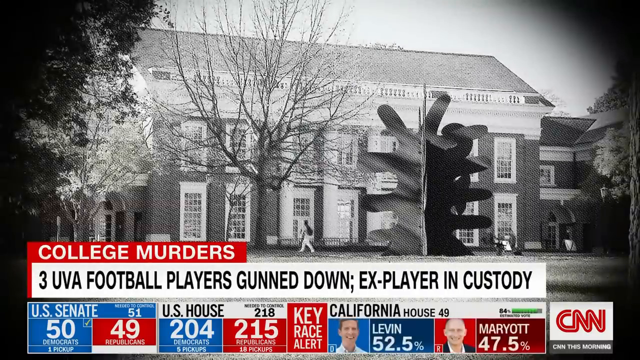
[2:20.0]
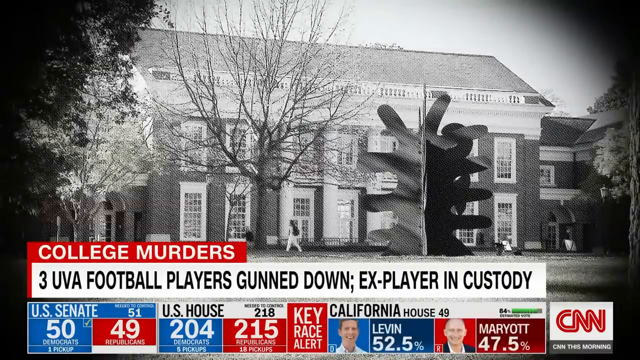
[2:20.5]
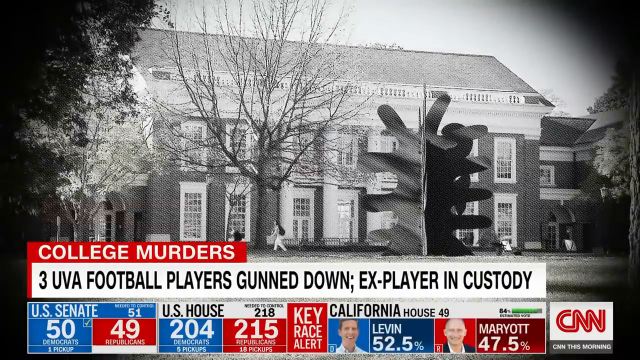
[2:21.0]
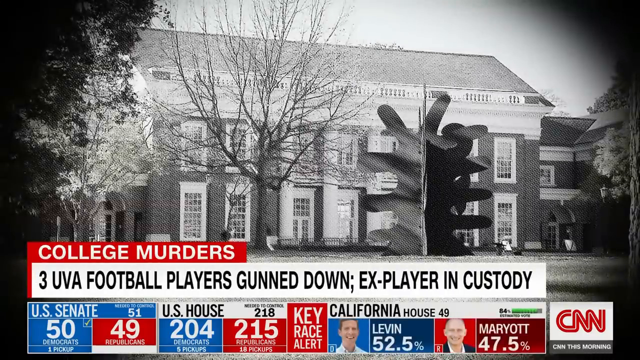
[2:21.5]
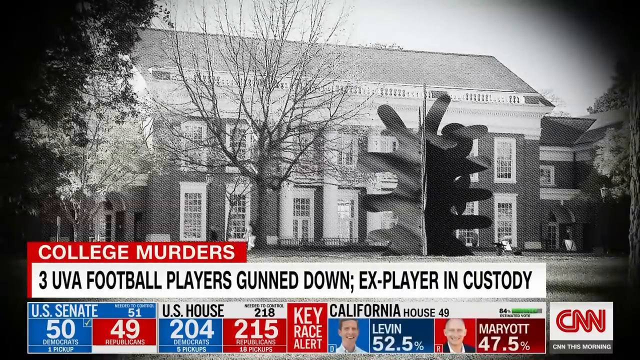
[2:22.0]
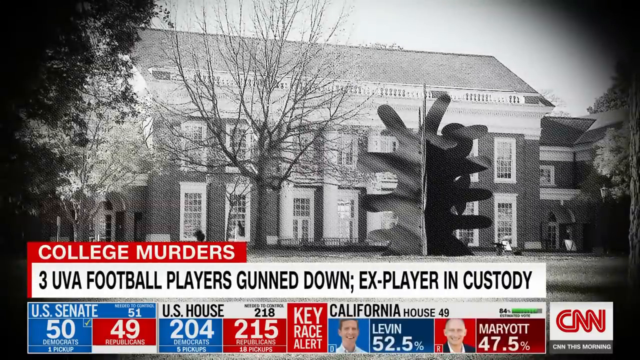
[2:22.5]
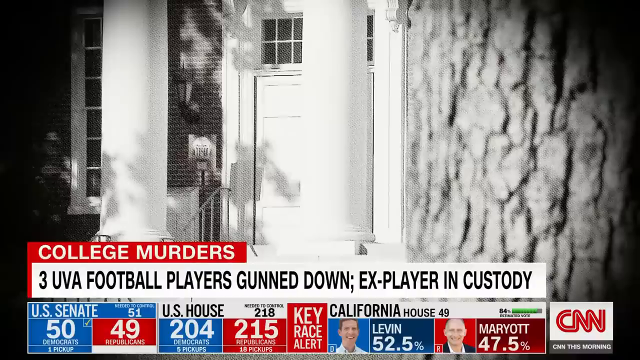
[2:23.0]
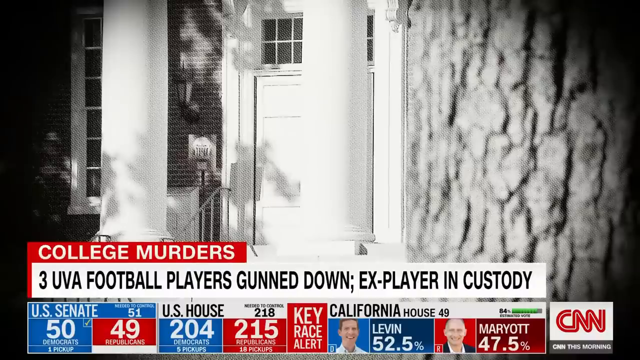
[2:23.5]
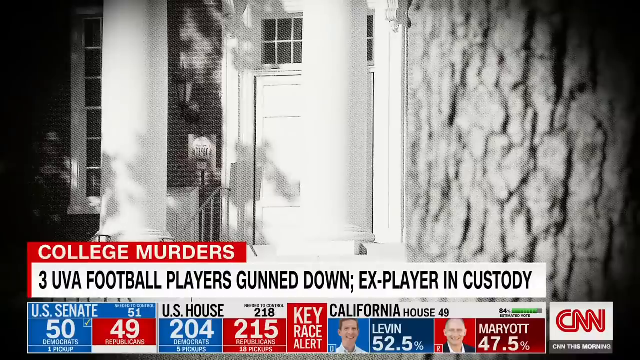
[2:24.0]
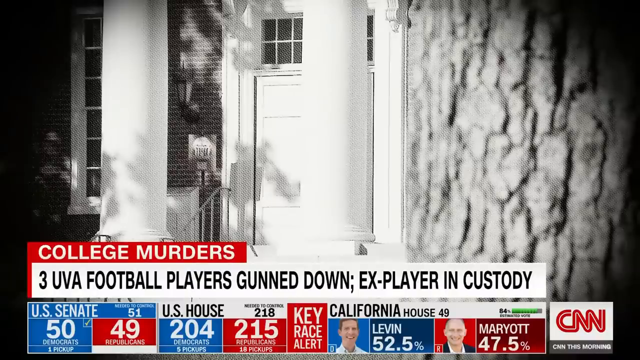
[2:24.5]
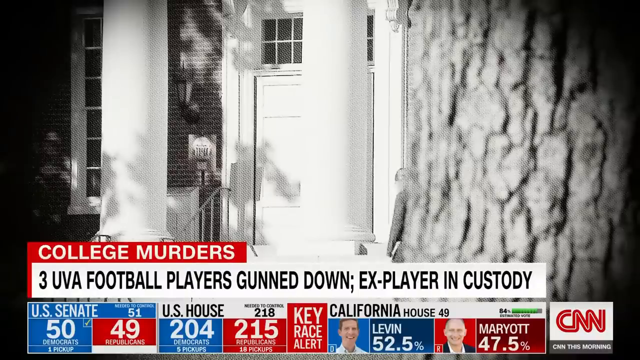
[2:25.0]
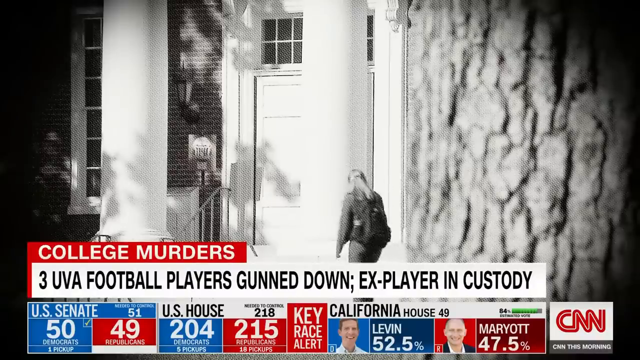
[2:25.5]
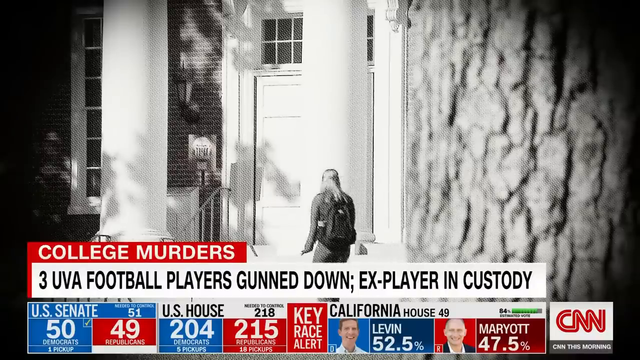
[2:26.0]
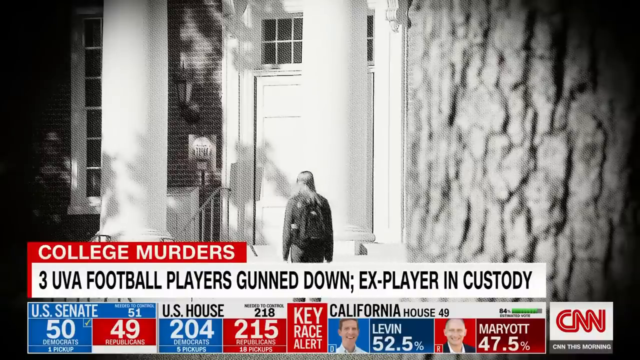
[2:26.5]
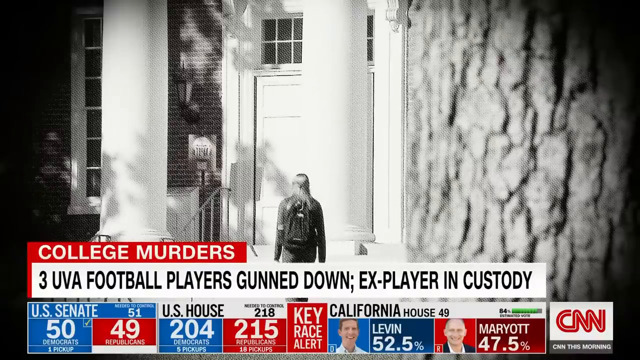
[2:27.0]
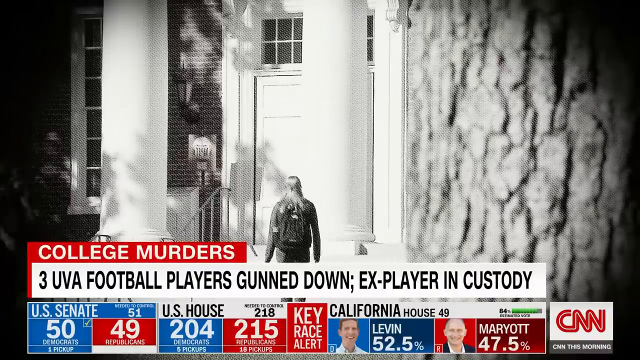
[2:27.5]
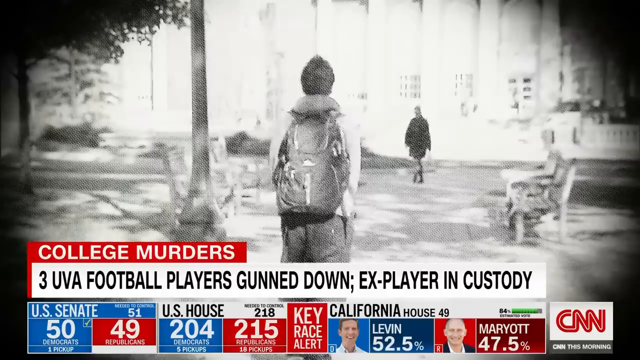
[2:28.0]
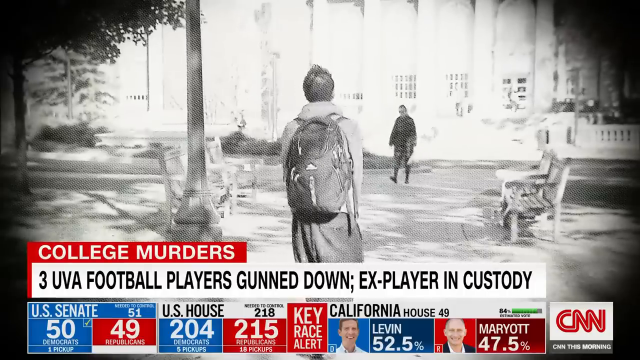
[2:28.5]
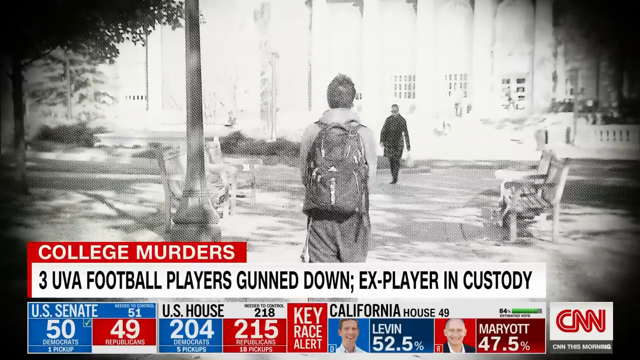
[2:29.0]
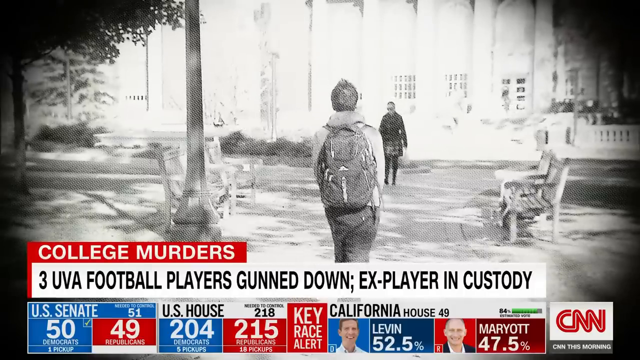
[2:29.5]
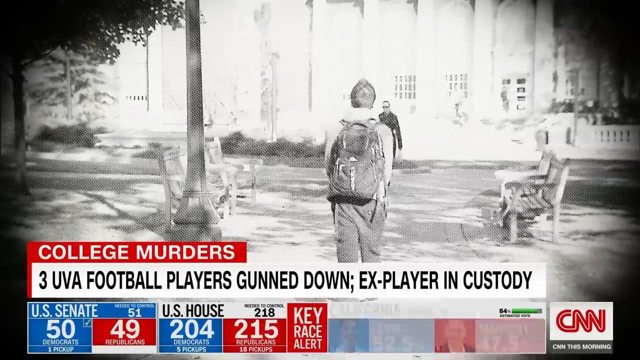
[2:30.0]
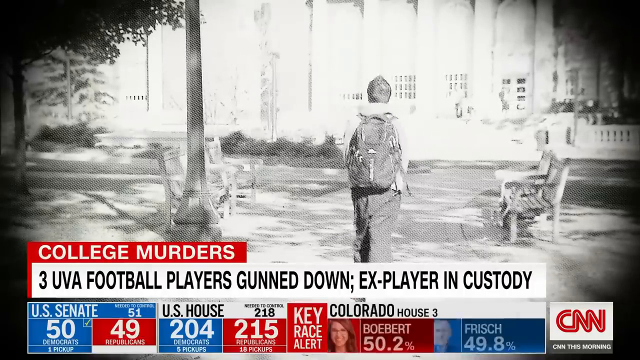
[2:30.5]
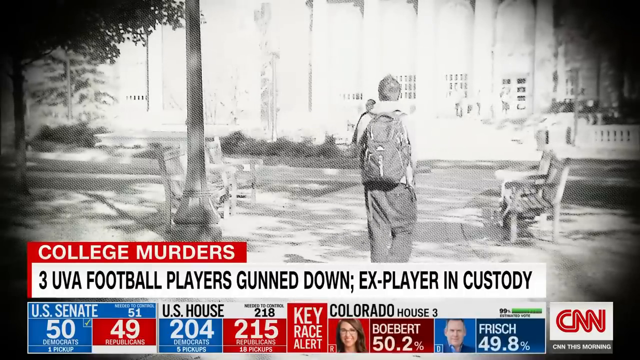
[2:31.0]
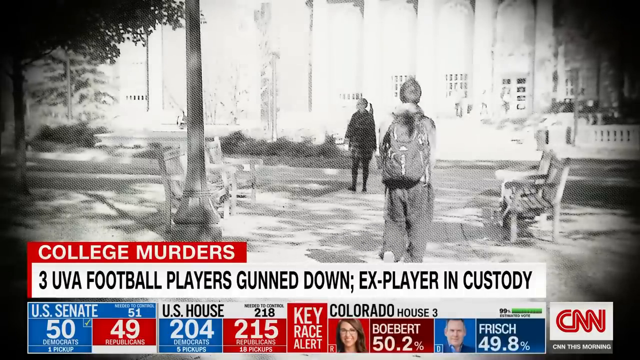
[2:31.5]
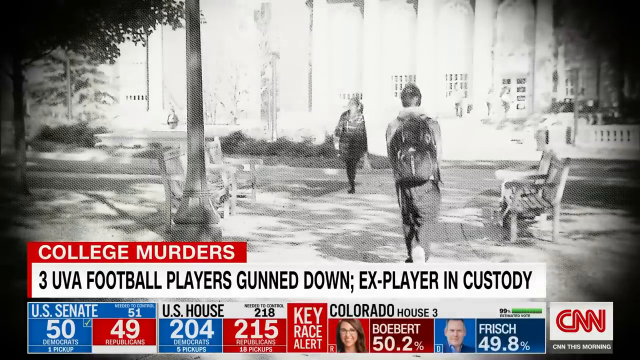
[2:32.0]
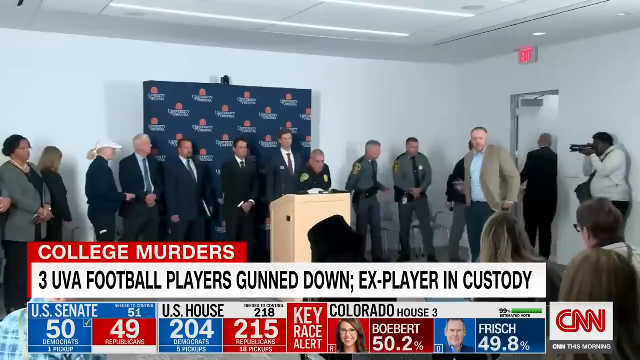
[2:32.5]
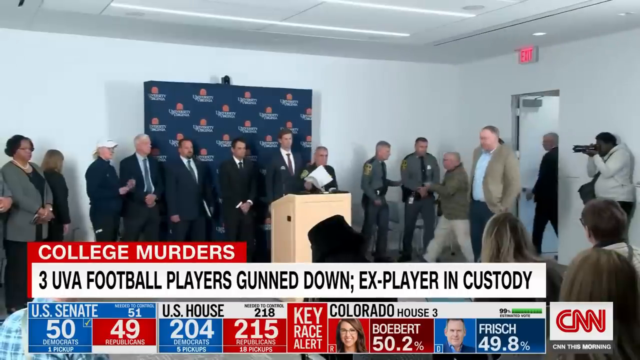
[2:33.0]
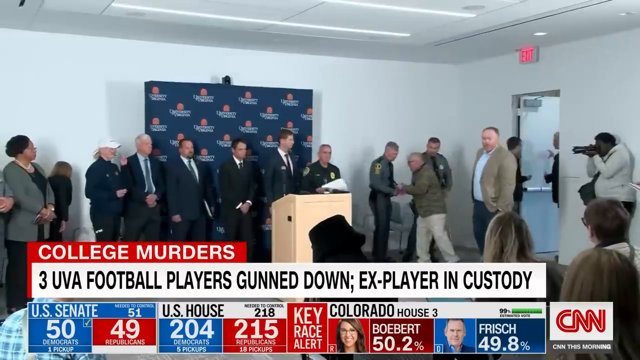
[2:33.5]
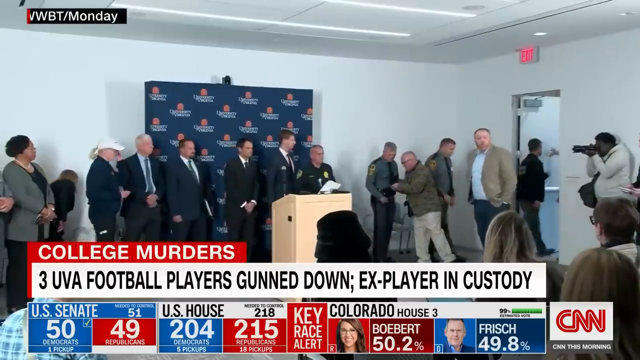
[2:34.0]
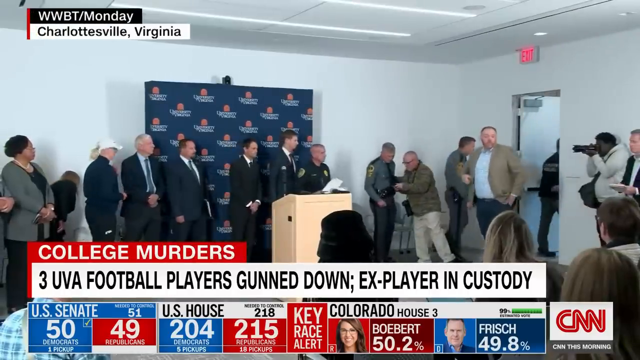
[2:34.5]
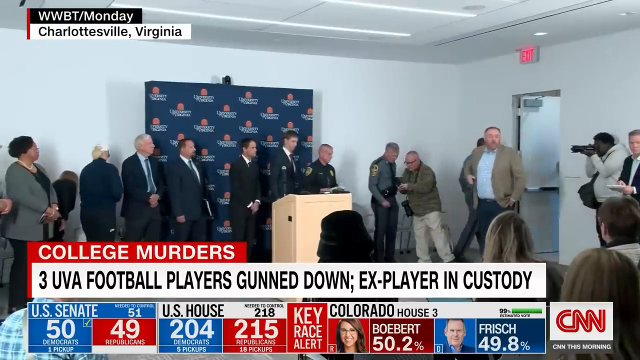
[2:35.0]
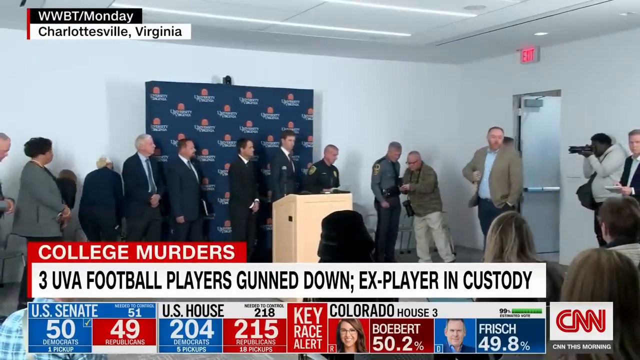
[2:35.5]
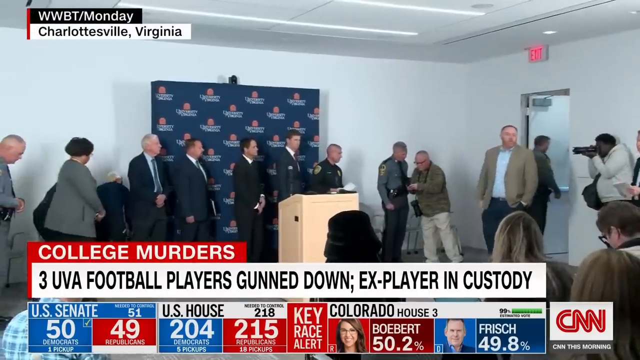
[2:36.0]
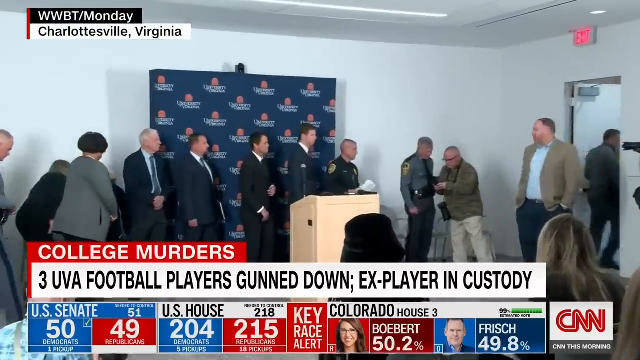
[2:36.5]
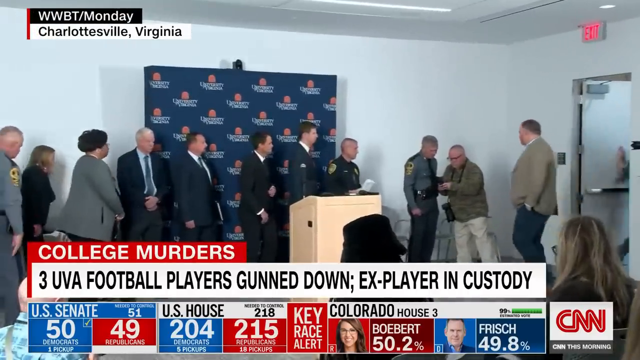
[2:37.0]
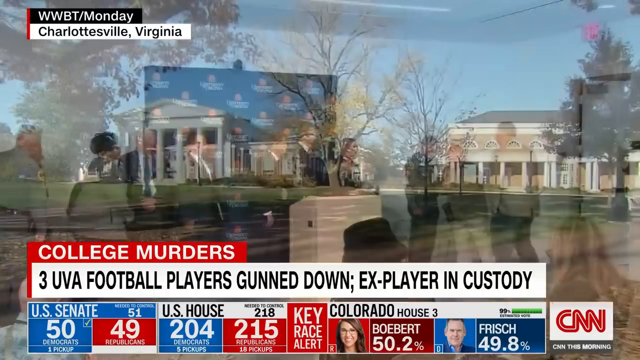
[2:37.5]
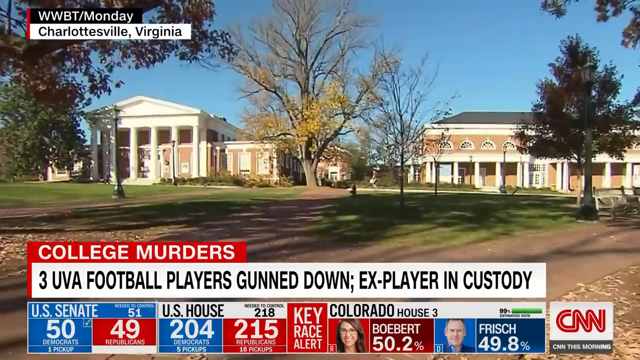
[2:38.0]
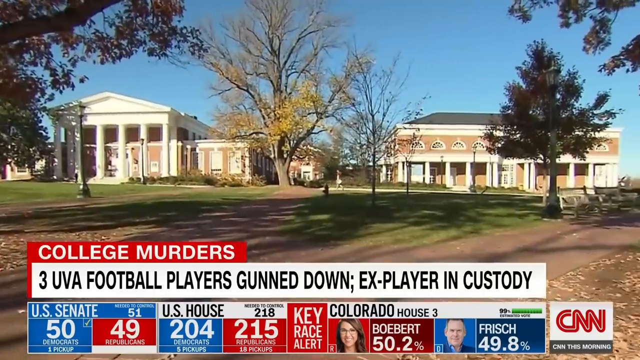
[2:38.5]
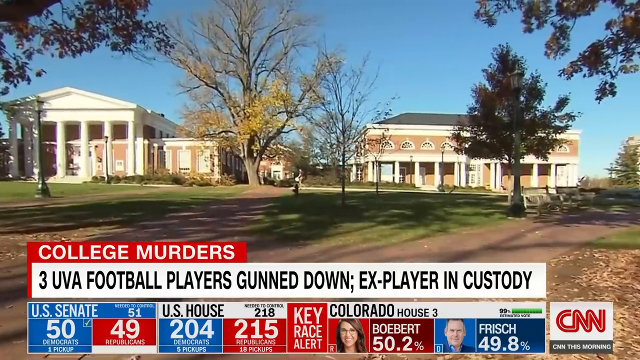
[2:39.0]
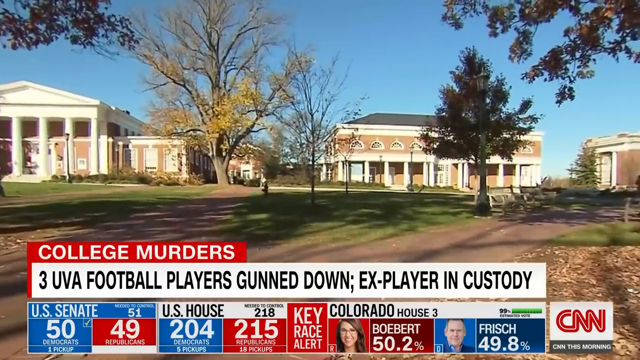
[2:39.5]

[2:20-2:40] The CNN coverage titled "College Murders," with the text "Three UVA football players gunned down, ex-player in custody," shows general footage taken on campus of students walking and going into university buildings. This footage has a stylized vignette appearance and is in black and white. The footage then cuts to a large room where a press conference is being held. The board at the end of the room is blue and bears the University of Virginia logo, with a beige lectern in front of it. Standing in front of the board are many people, mostly men in suits, as well as two security personnel. People are seated in rows in front of the lectern, and a cameraman next to an exit door takes photos with a telephoto lens of the men in front of the blue logo board. The event is possibly held inside a large auditorium at the university.